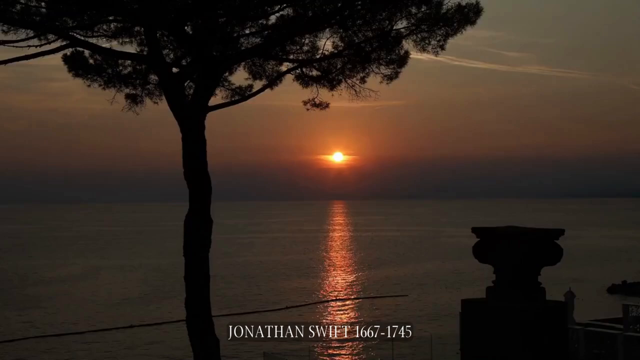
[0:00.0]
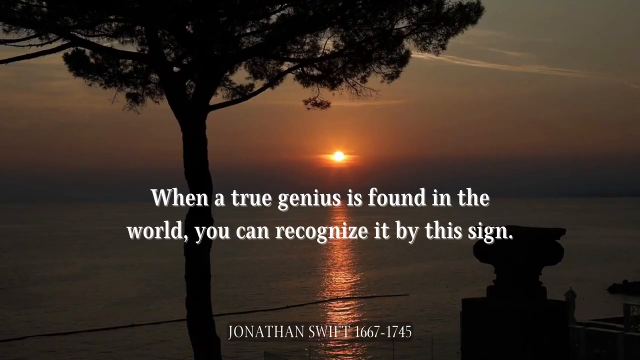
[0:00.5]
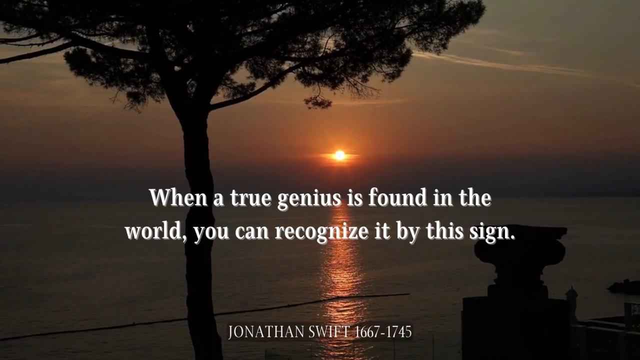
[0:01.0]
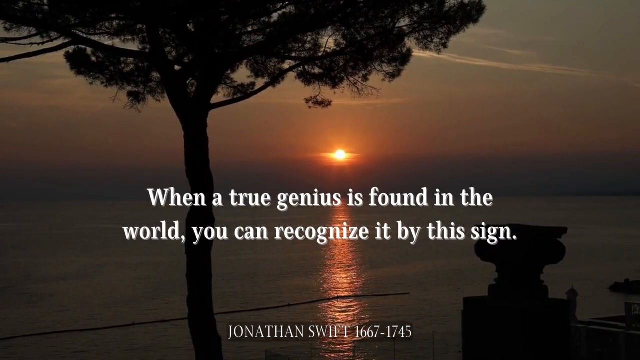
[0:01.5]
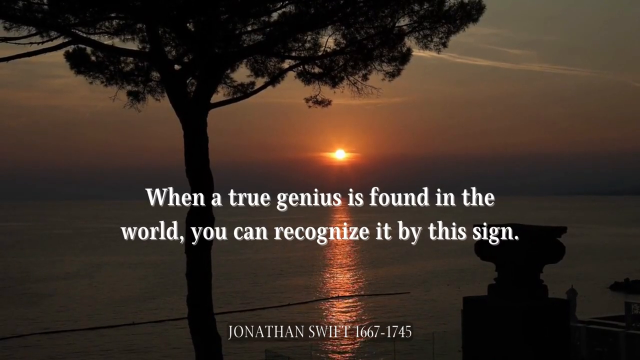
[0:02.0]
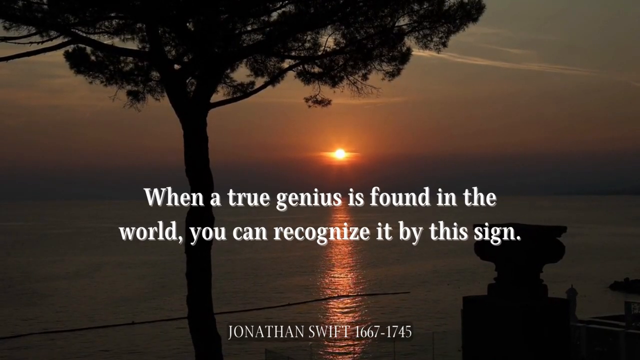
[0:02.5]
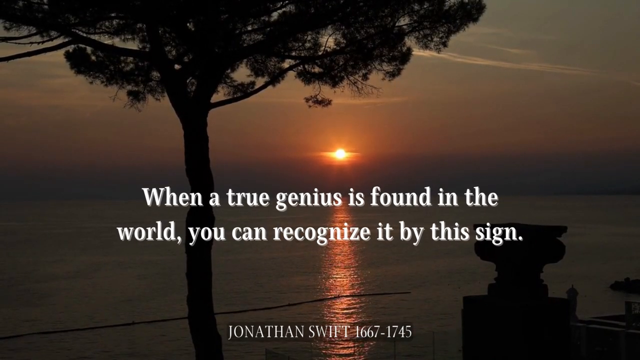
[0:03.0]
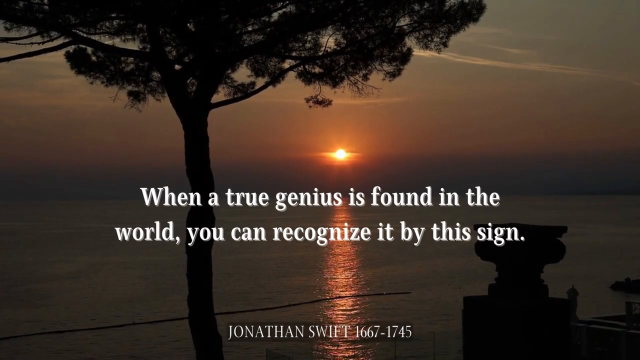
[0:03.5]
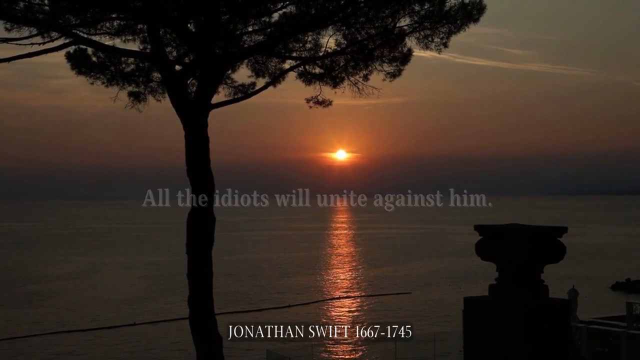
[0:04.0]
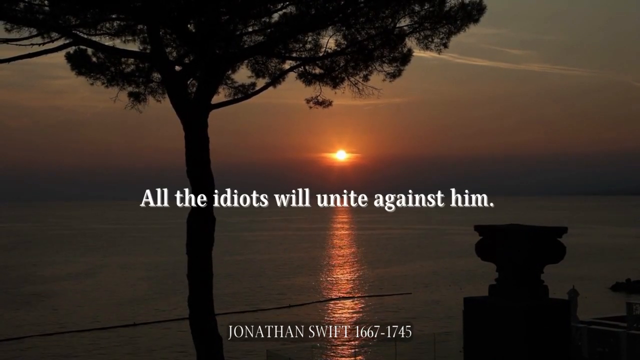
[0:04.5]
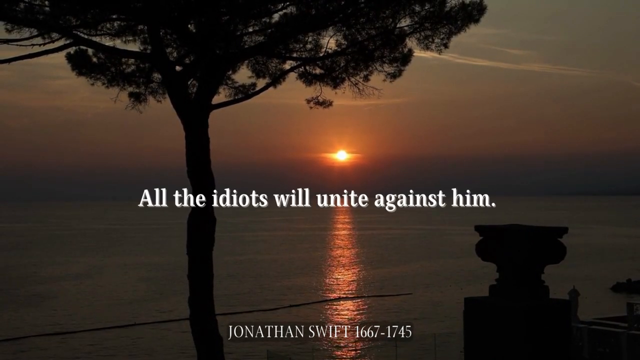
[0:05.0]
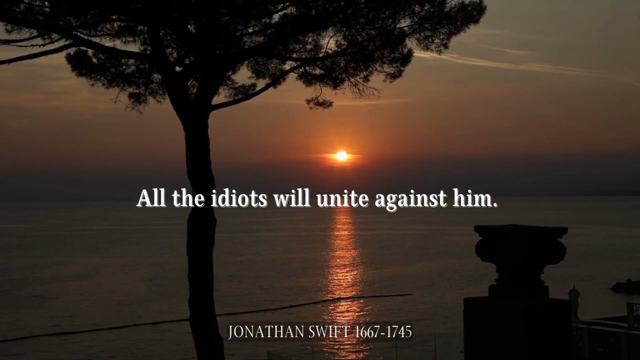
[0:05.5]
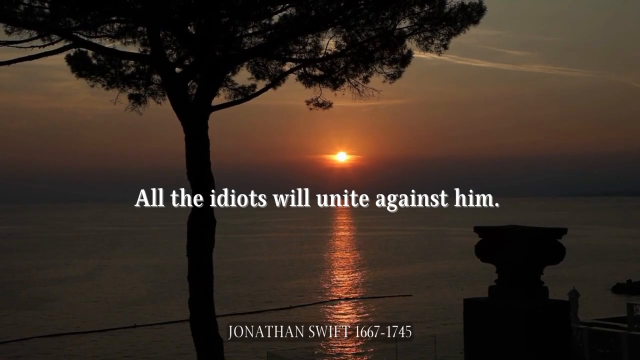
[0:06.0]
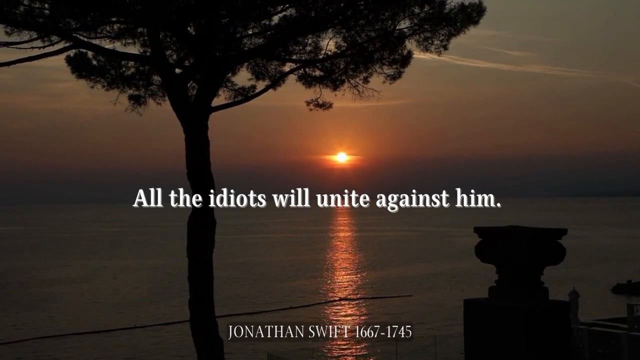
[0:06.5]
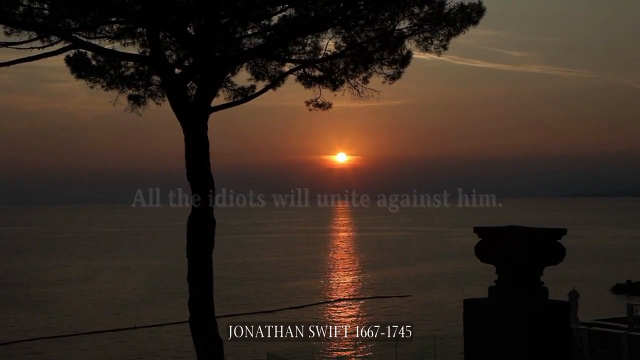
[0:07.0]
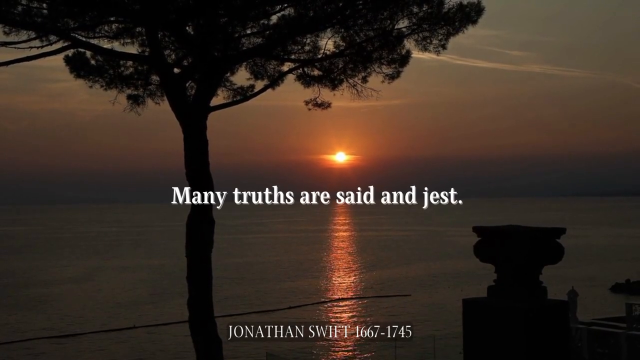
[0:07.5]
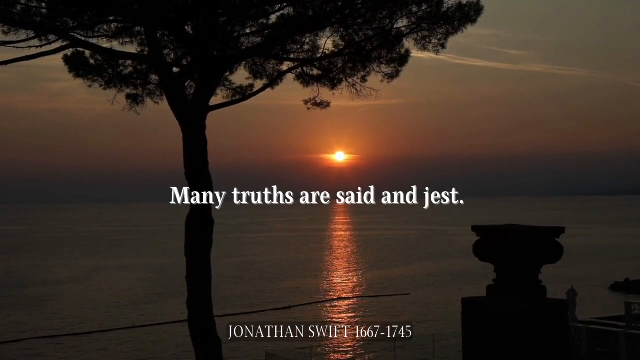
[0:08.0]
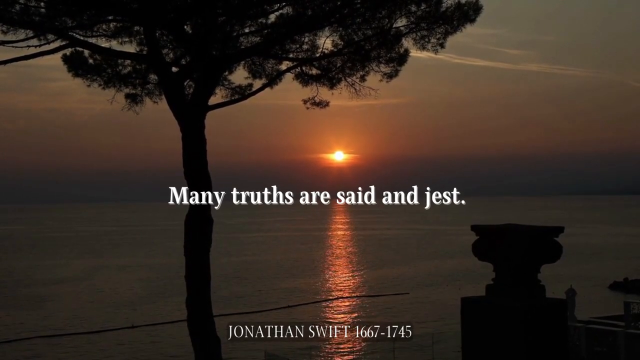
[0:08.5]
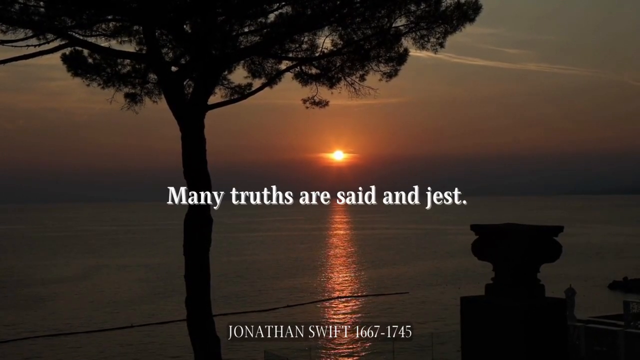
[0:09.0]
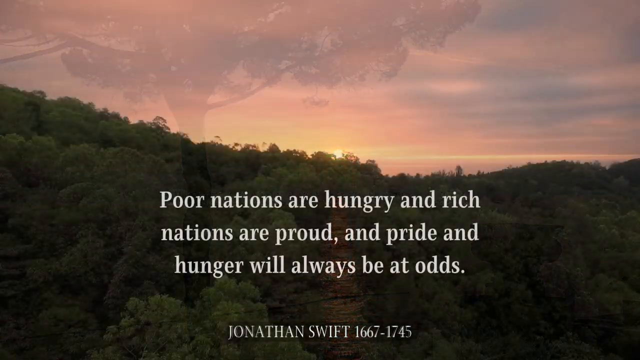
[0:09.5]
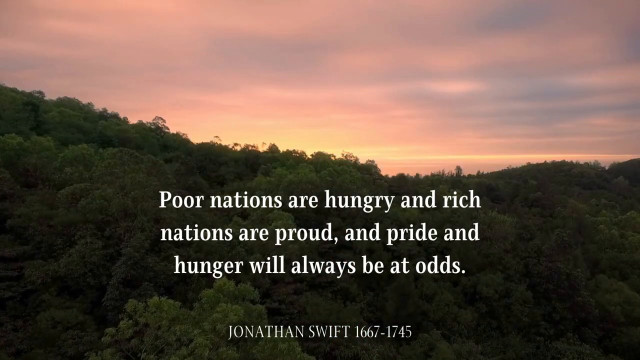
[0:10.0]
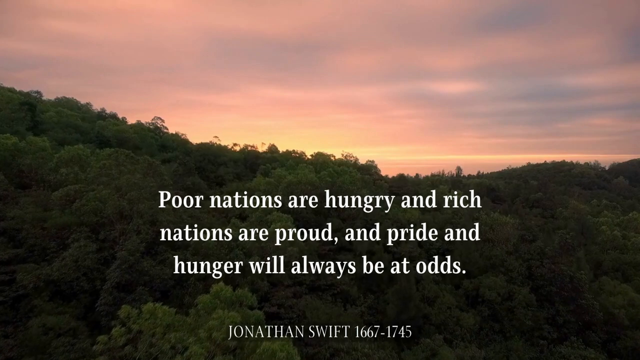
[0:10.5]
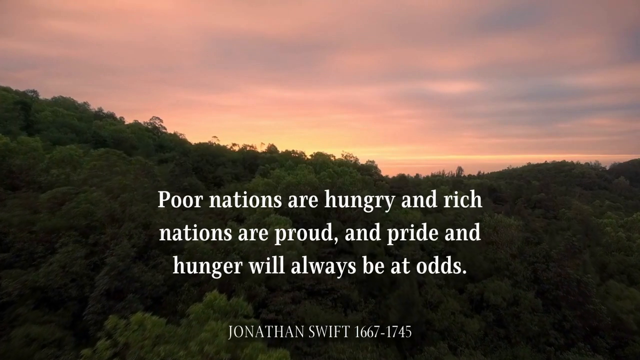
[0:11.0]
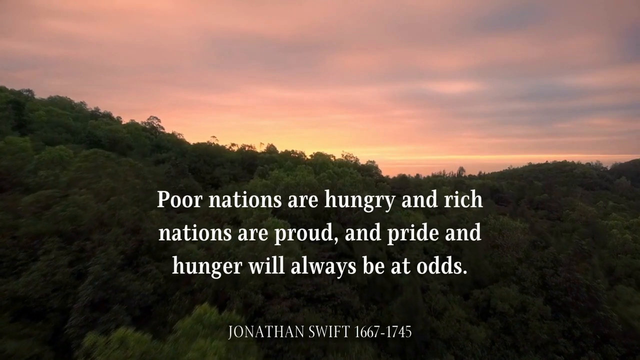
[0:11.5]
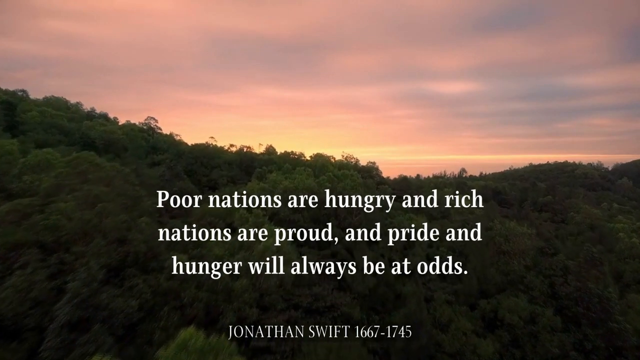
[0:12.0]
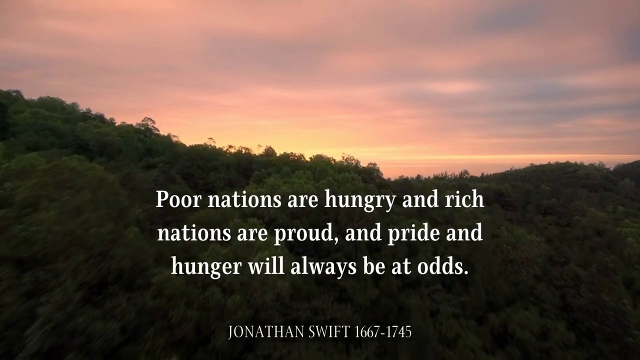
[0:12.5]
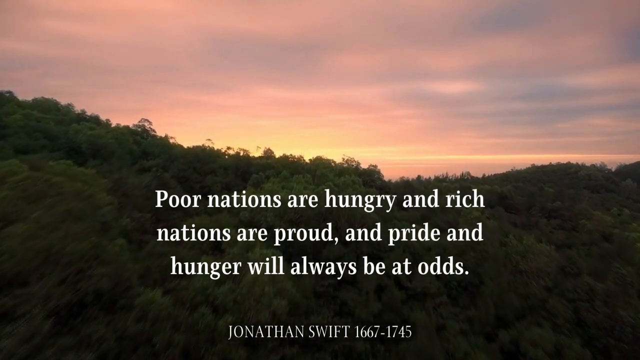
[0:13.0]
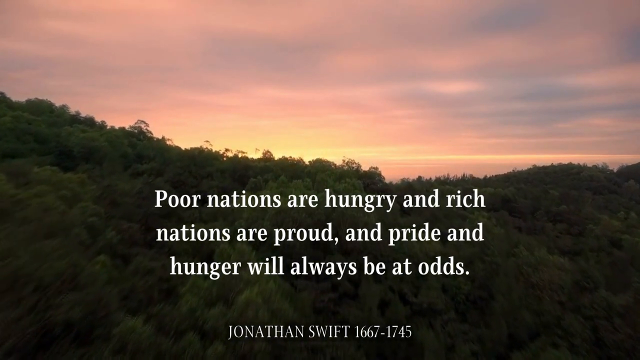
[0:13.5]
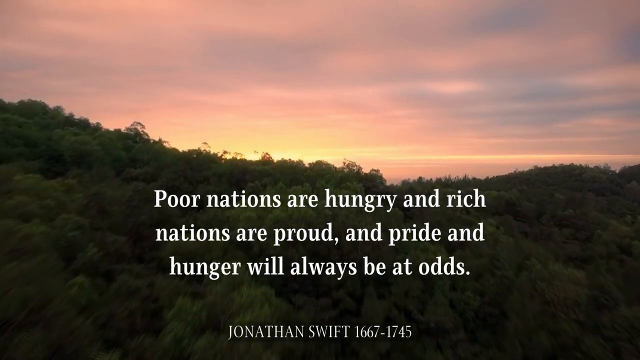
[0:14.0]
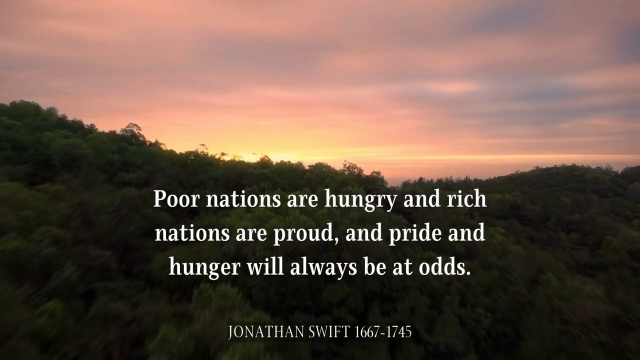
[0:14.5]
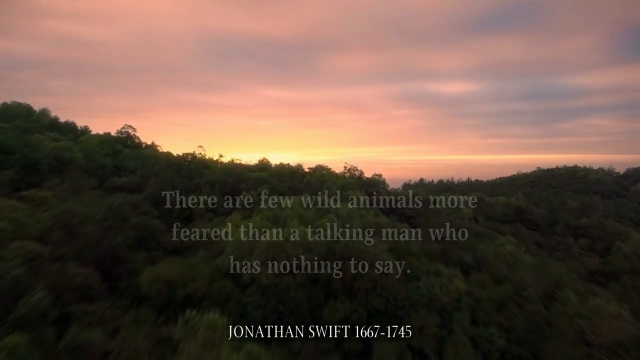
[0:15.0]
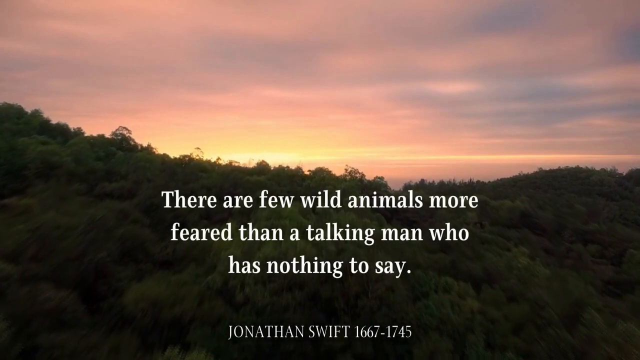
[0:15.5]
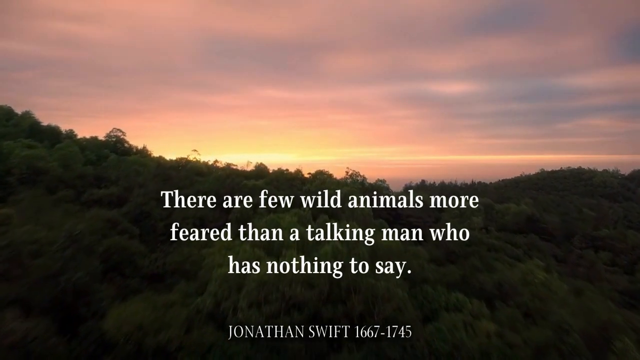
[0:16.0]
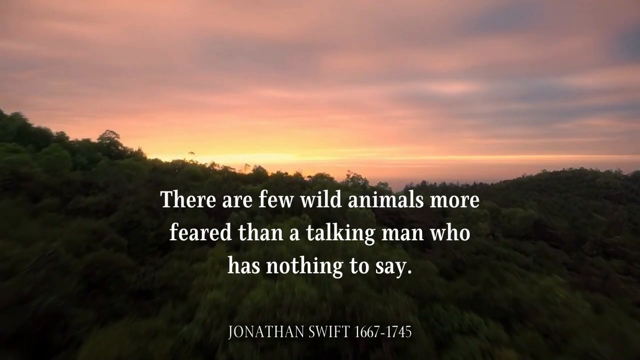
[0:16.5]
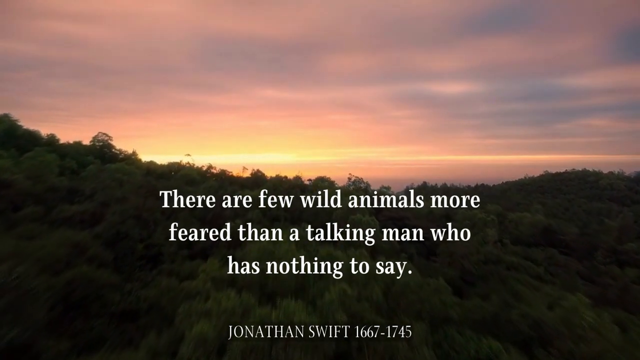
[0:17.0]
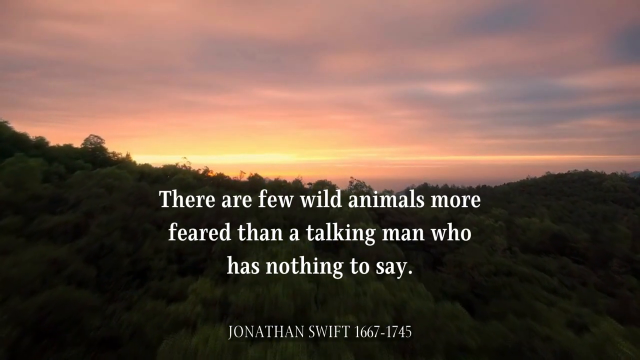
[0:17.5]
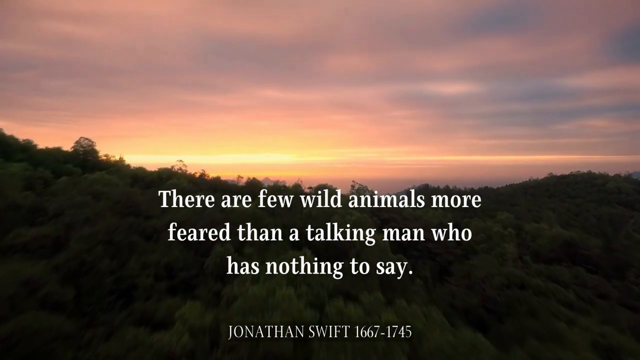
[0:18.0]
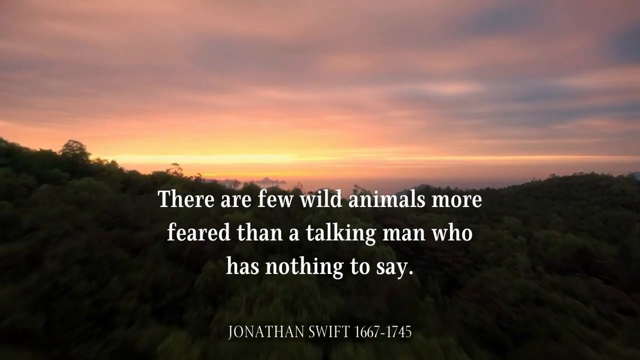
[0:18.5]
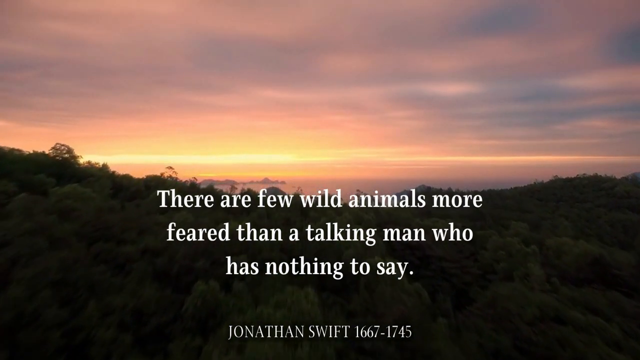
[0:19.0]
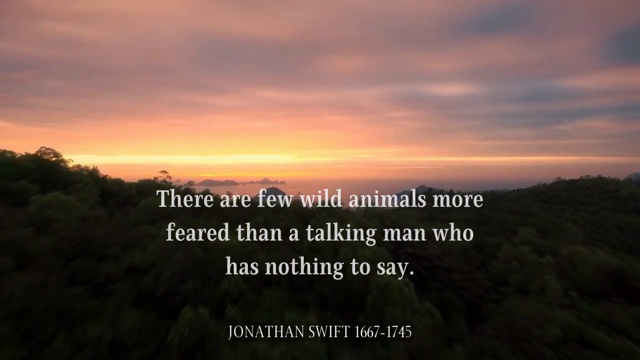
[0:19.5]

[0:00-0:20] A vista of a lake or another body of water with still water, in a dark tone.